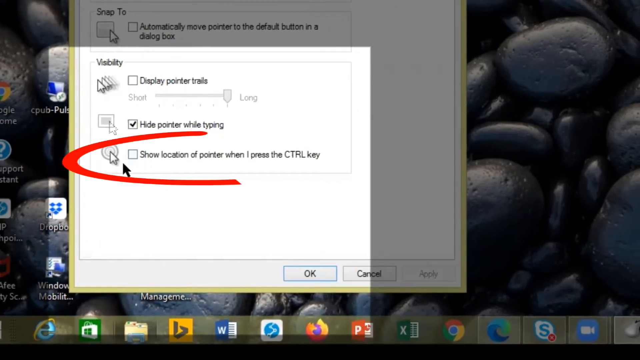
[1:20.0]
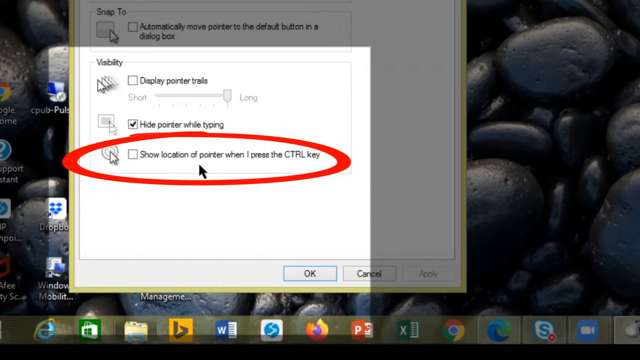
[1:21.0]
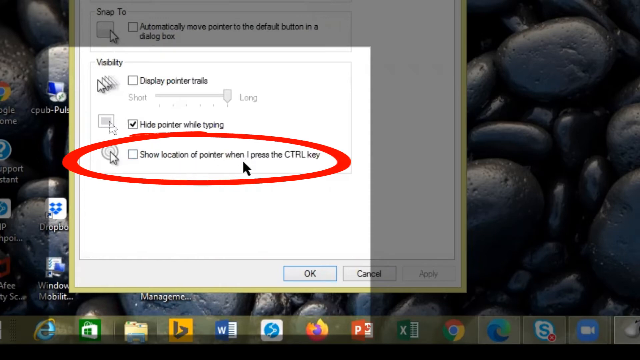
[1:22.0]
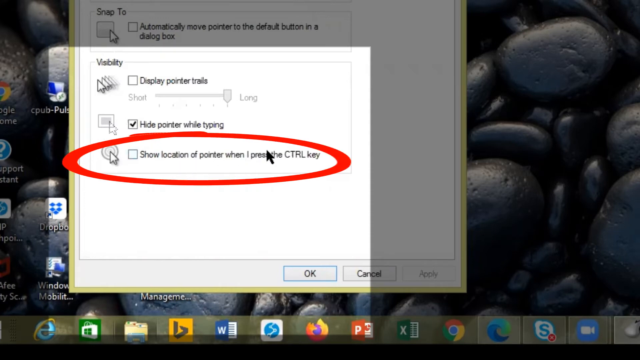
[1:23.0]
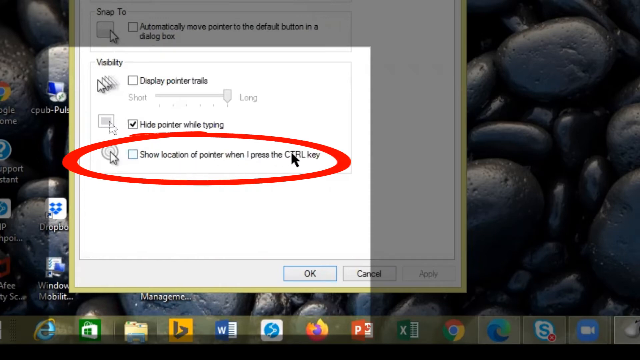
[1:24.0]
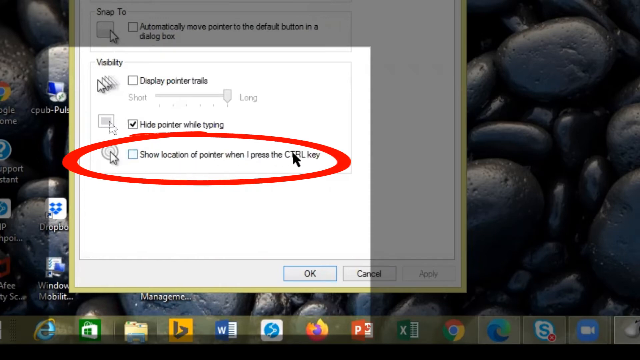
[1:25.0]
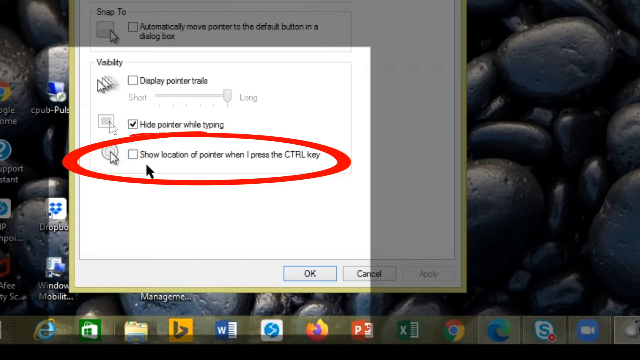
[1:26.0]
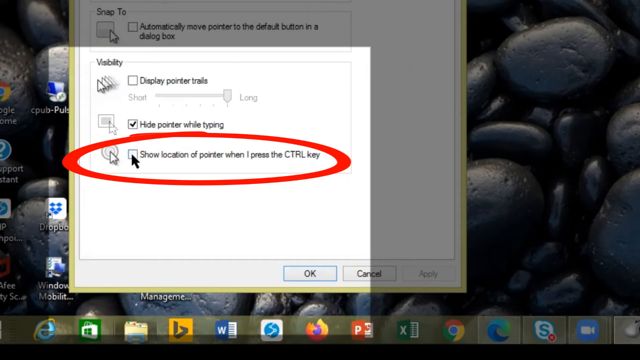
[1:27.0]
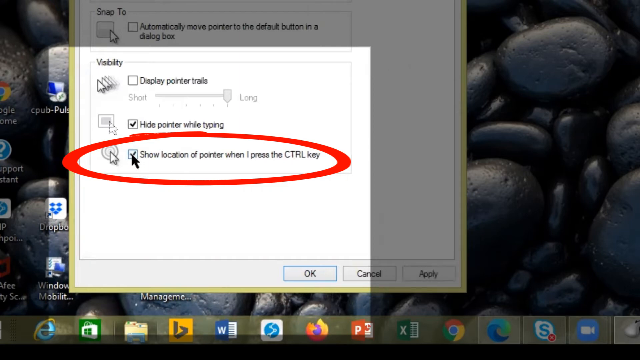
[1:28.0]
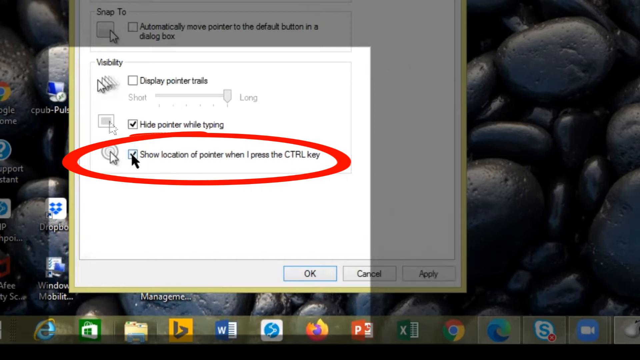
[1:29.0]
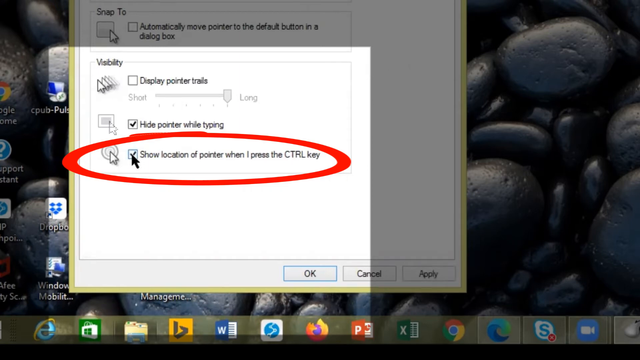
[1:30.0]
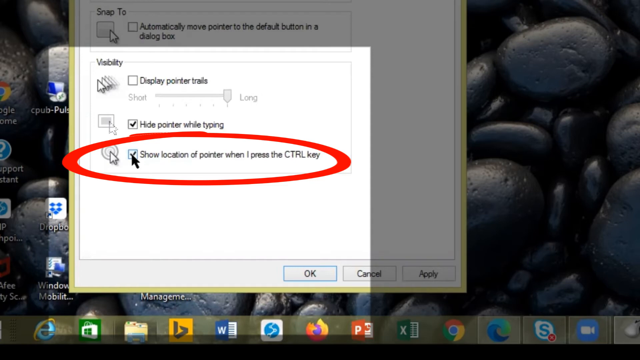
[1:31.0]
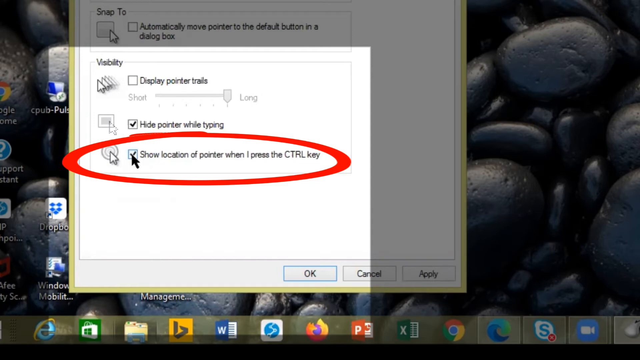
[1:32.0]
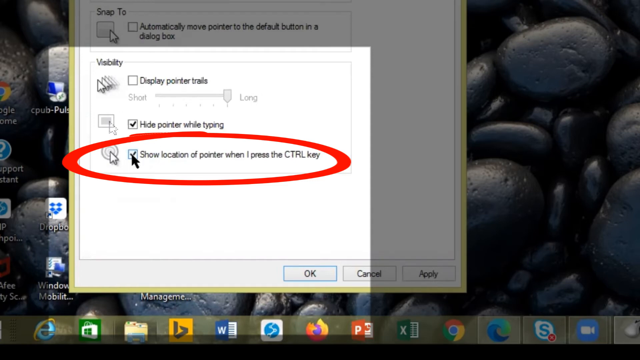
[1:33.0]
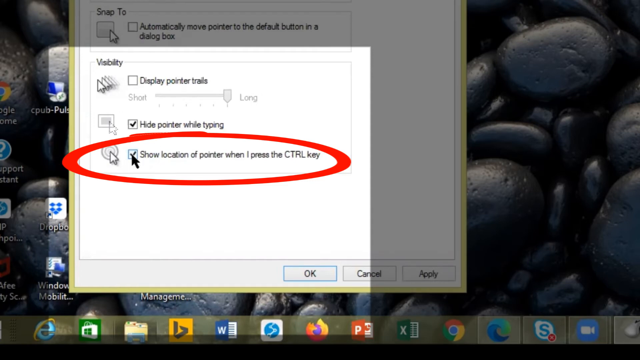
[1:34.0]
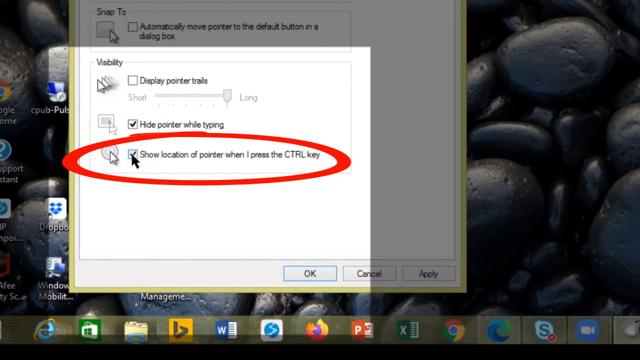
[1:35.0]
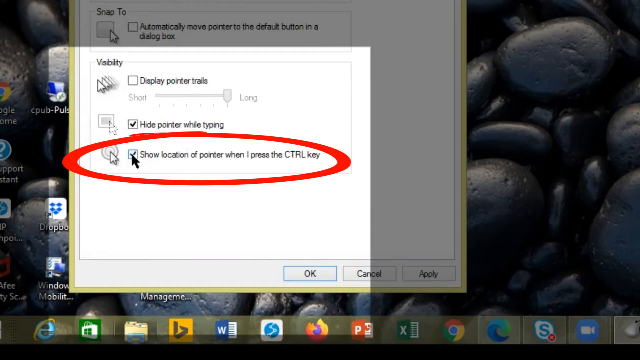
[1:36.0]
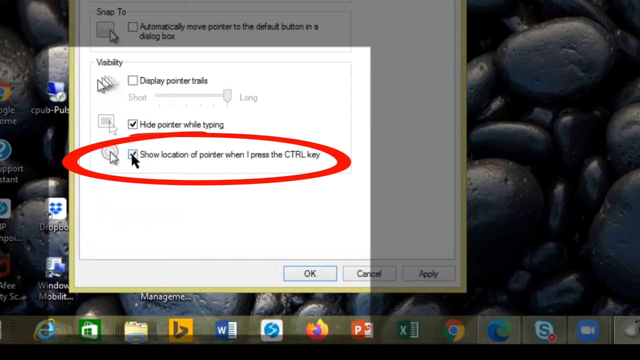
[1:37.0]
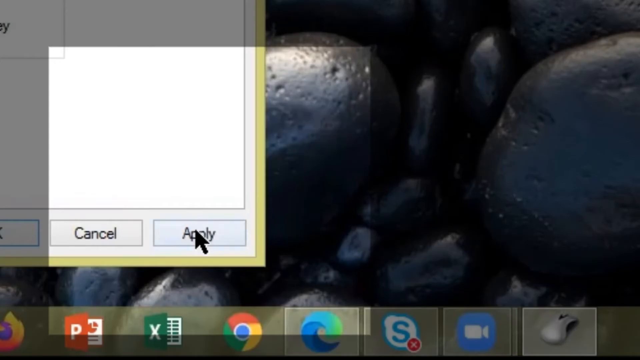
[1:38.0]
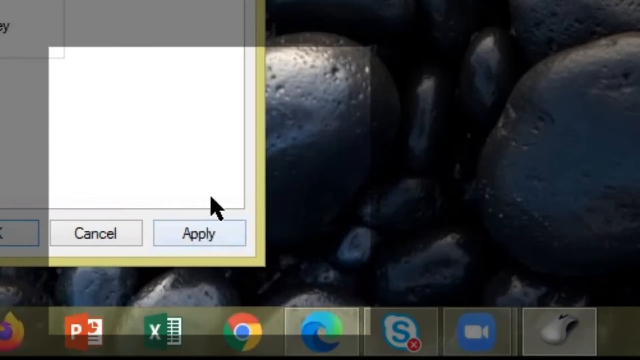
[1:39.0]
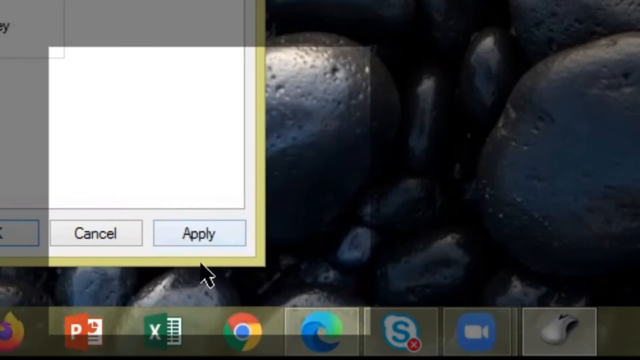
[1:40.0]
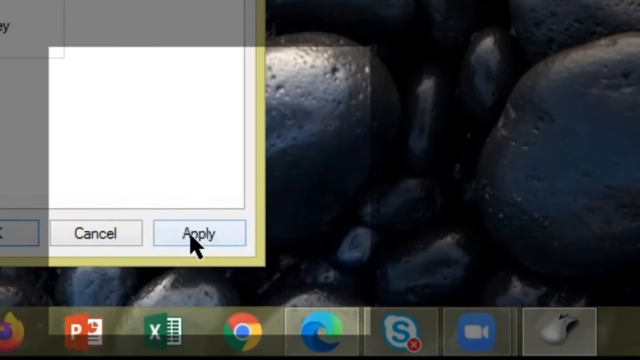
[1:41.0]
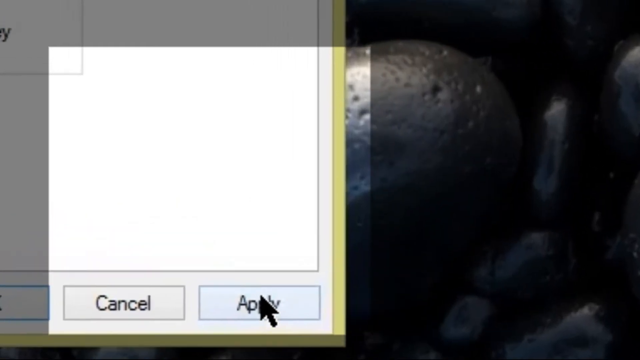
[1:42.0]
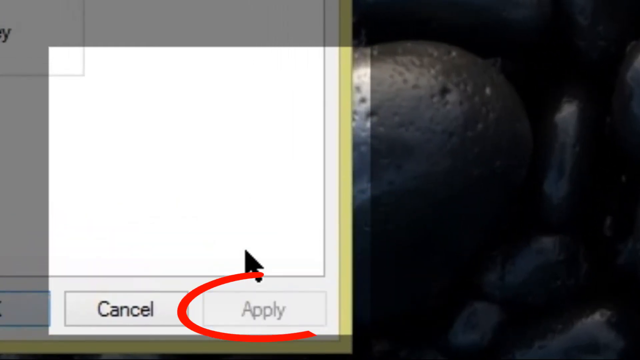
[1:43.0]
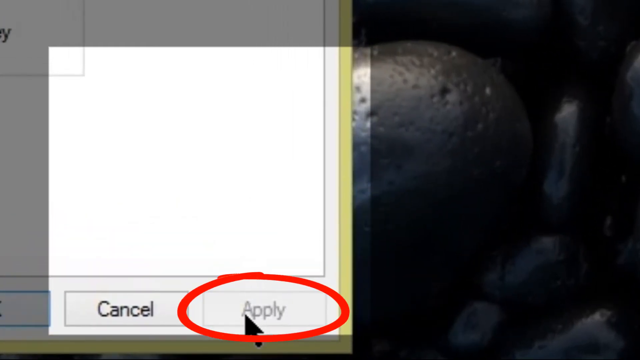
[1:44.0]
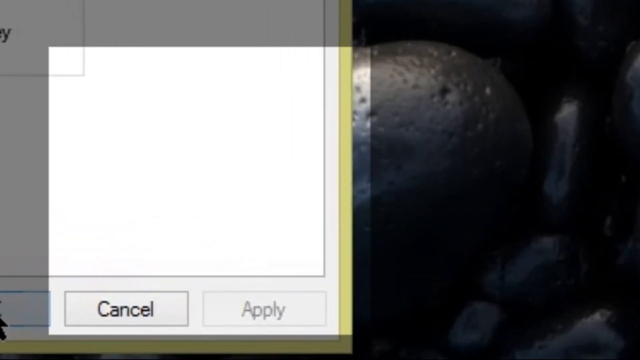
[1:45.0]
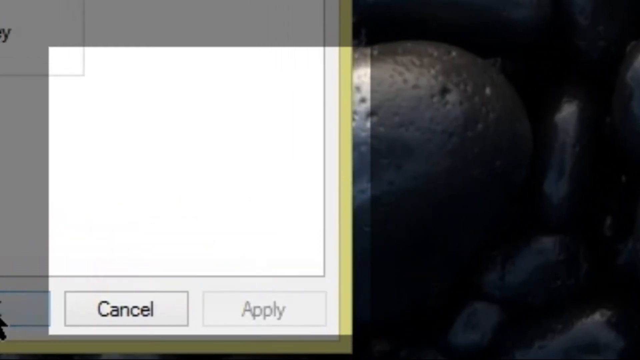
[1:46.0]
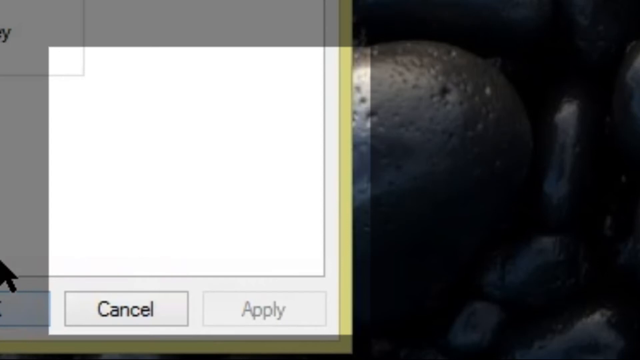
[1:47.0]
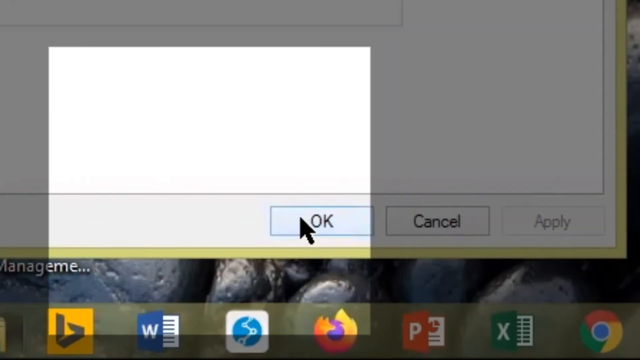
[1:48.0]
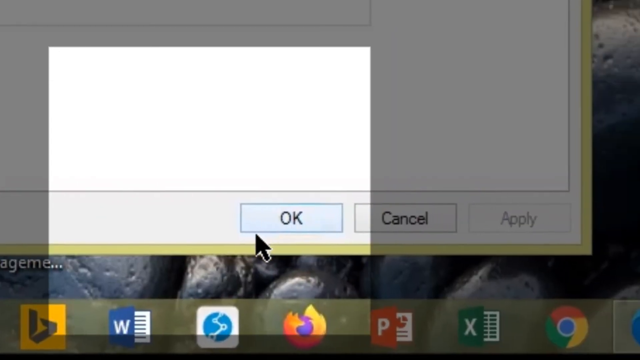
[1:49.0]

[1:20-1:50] The pointer options are still up, with a red circle drawn around the option to show the location of the pointer when the Control key is pressed, and the cursor kind of highlights it. There is a little box to check to activate that feature, and it gets checked. A little gray circle keeps going in and highlighting it. The square flashlight-like highlight then moves over the Cancel and Apply buttons. The mouse hovers over Apply and kind of circles it, and a red line appears, apparently directing a click on Apply, which is then clicked. The square flashlight highlight appears over OK, the cursor kind of moves over OK, and the red line circles the OK button, which is clicked.